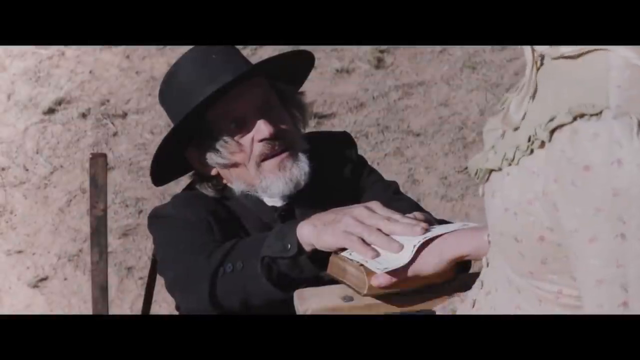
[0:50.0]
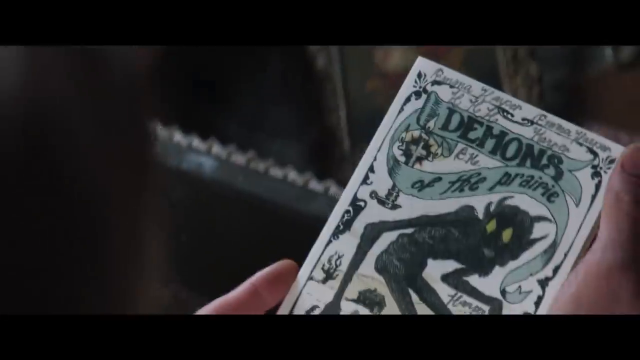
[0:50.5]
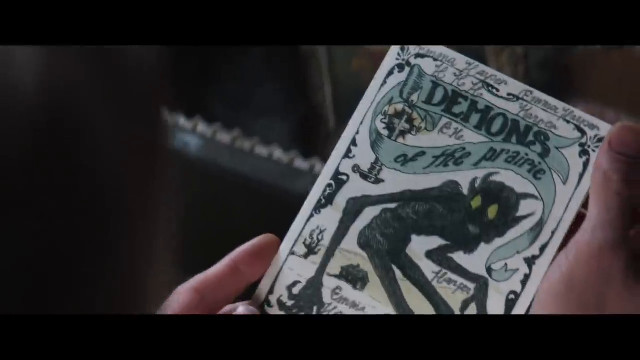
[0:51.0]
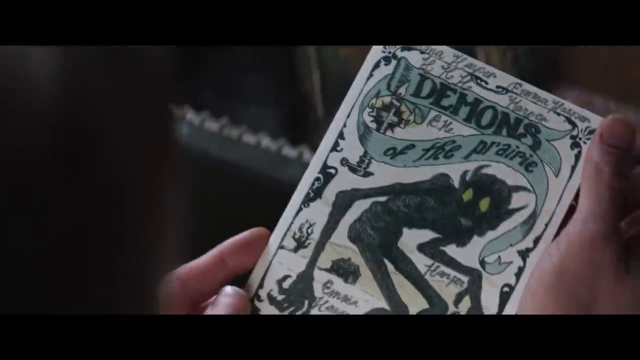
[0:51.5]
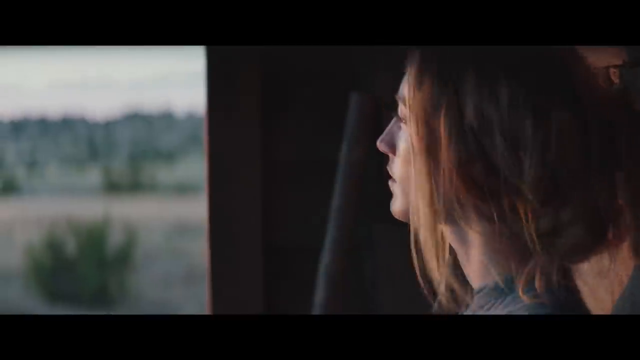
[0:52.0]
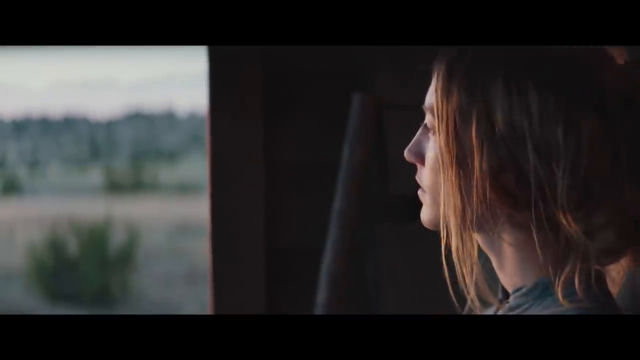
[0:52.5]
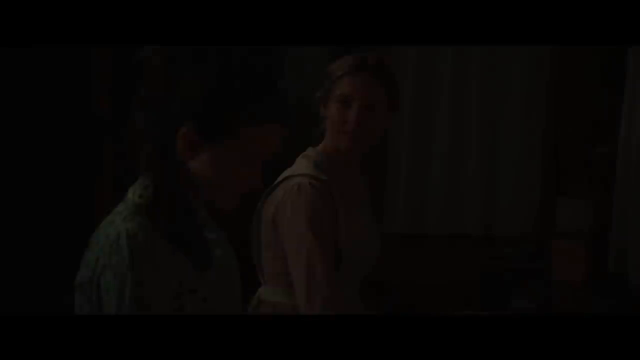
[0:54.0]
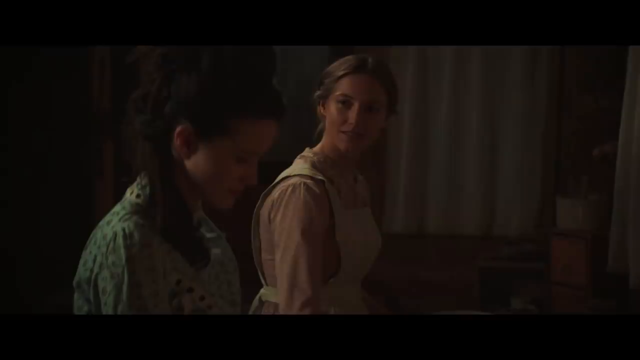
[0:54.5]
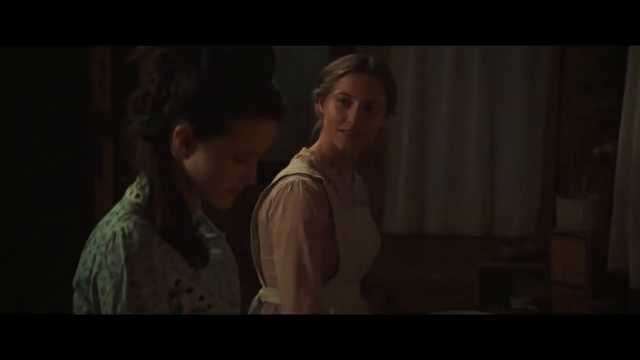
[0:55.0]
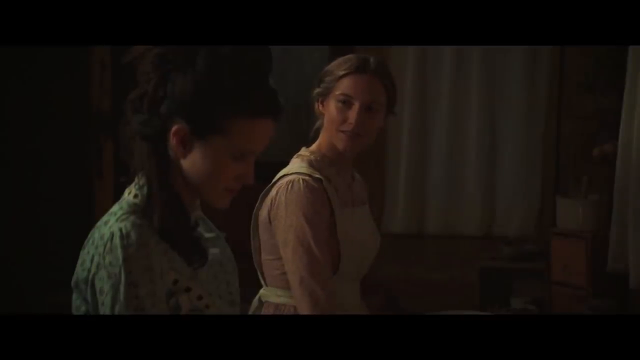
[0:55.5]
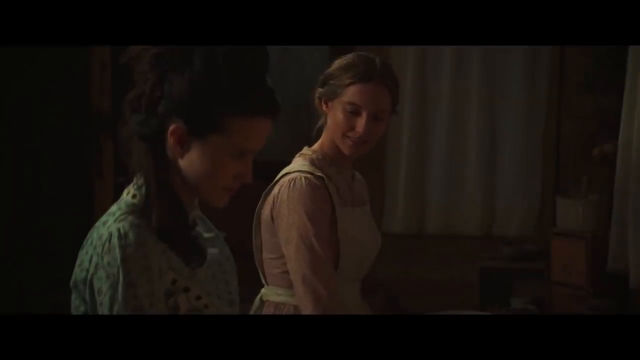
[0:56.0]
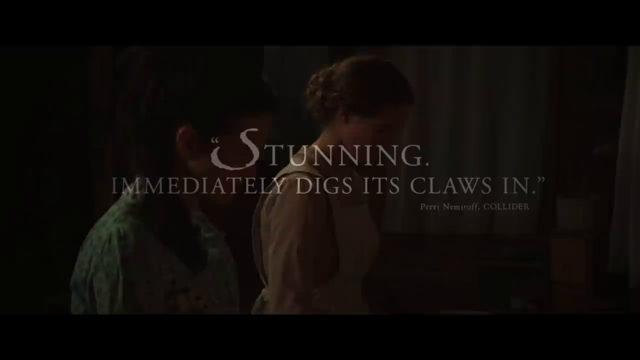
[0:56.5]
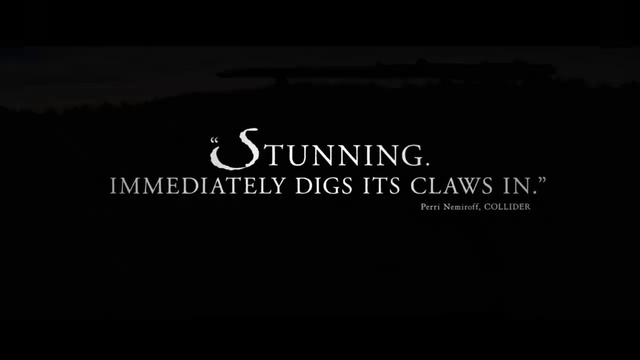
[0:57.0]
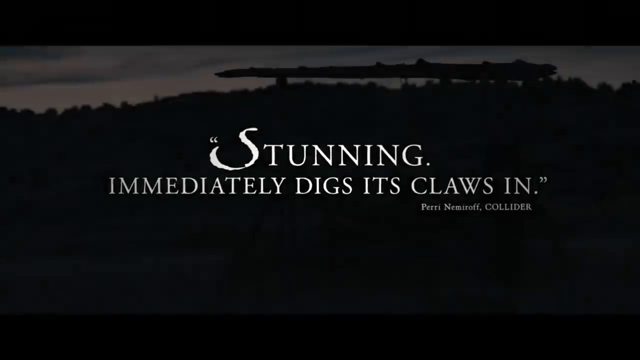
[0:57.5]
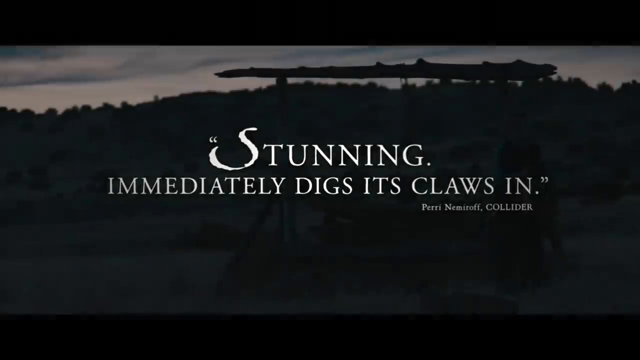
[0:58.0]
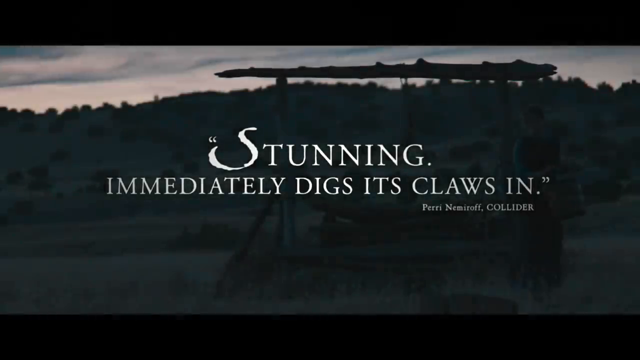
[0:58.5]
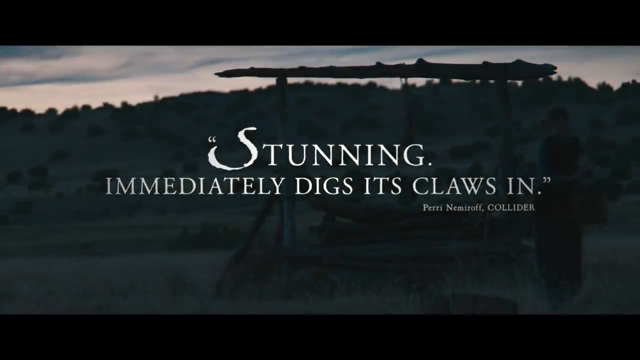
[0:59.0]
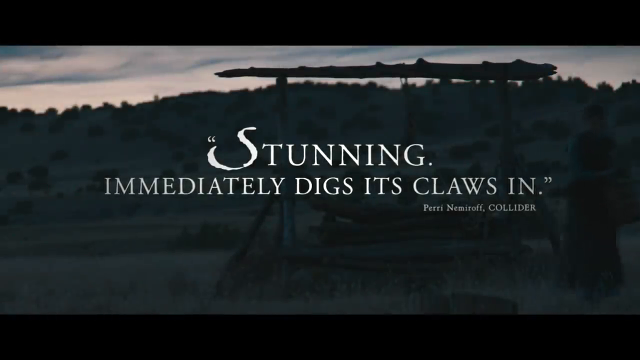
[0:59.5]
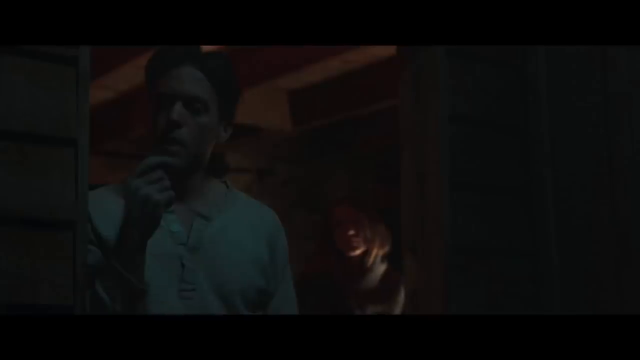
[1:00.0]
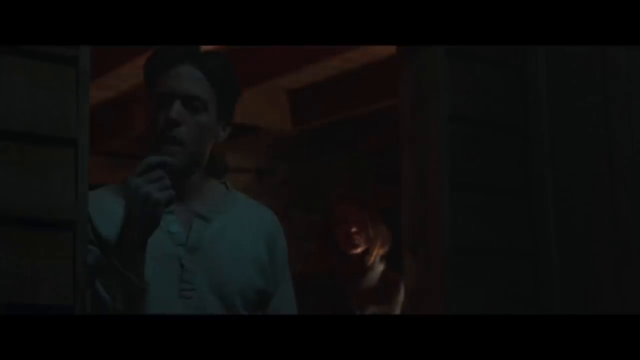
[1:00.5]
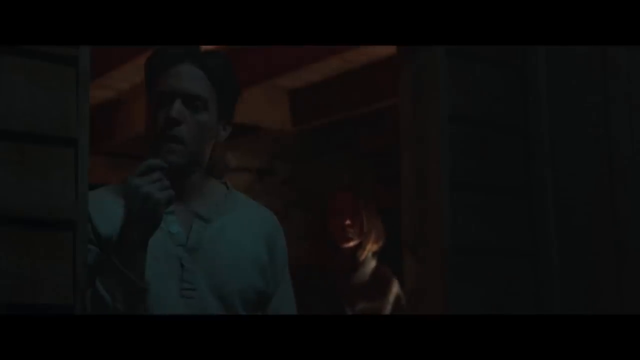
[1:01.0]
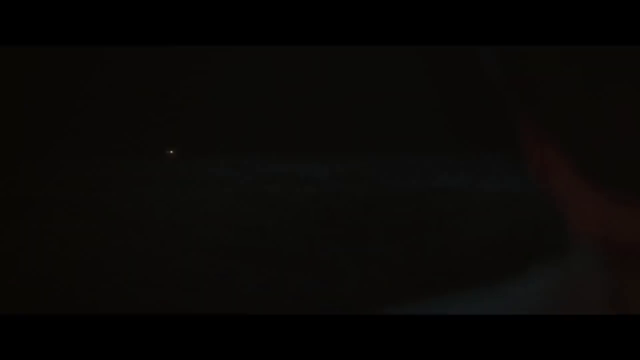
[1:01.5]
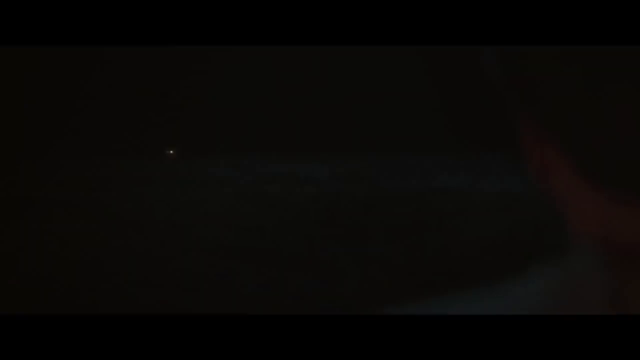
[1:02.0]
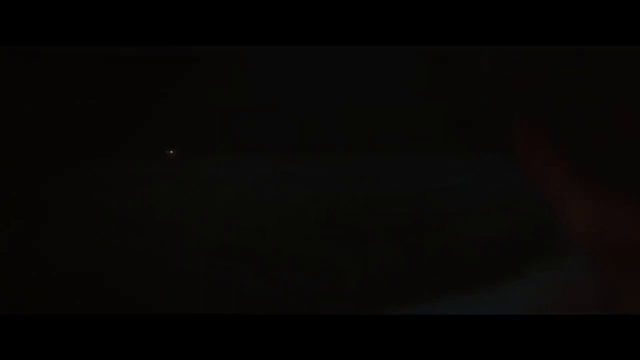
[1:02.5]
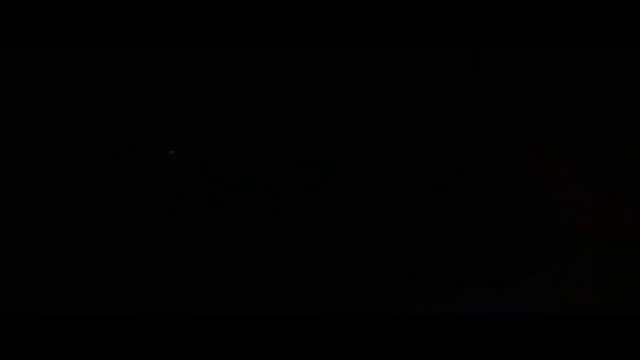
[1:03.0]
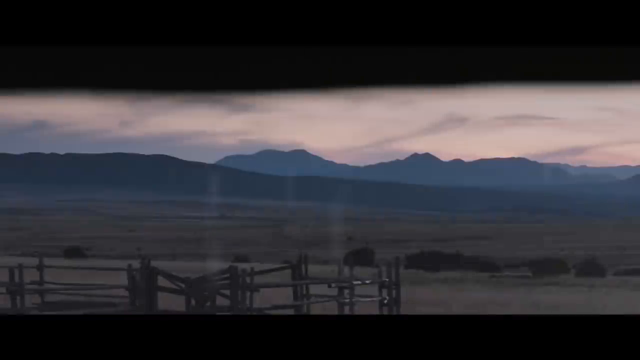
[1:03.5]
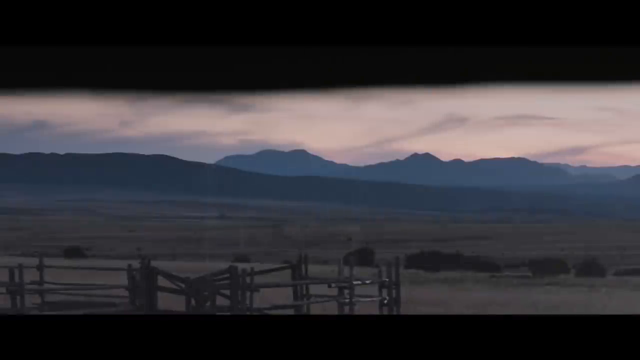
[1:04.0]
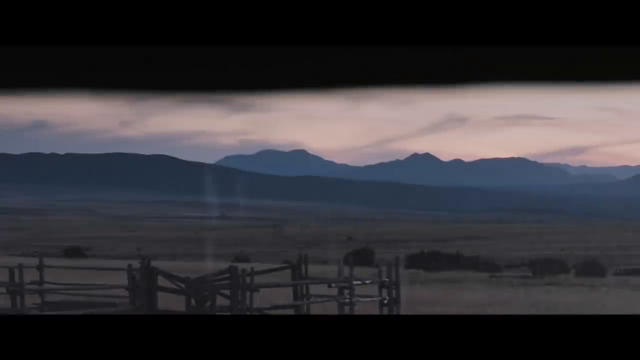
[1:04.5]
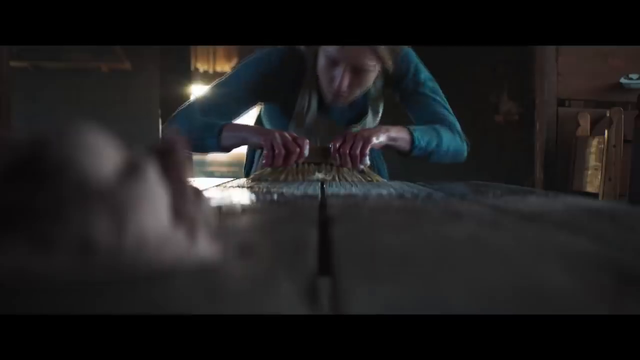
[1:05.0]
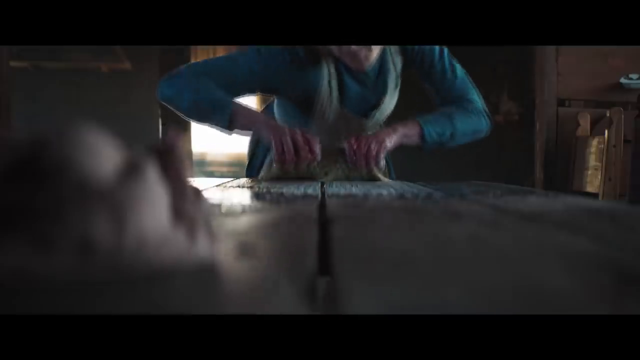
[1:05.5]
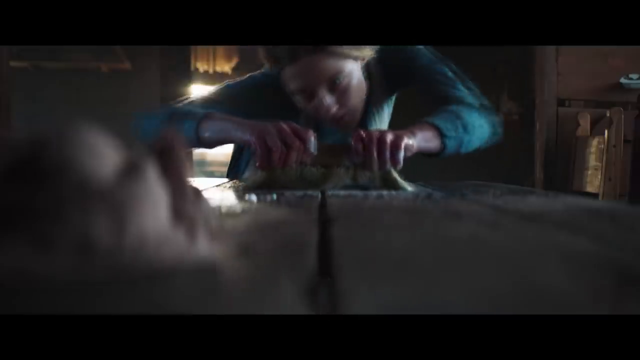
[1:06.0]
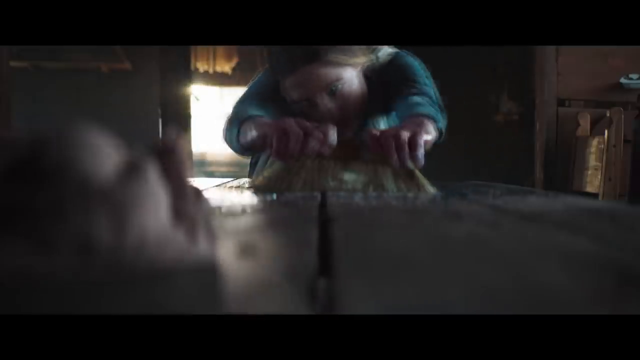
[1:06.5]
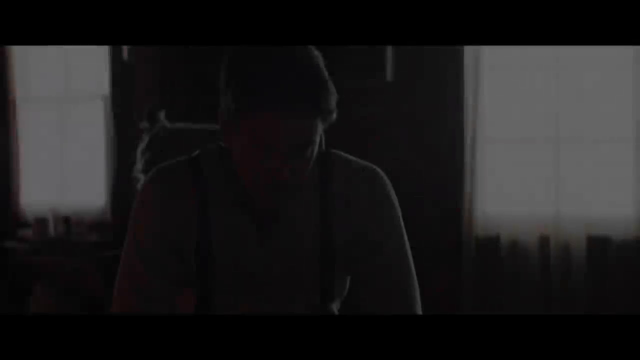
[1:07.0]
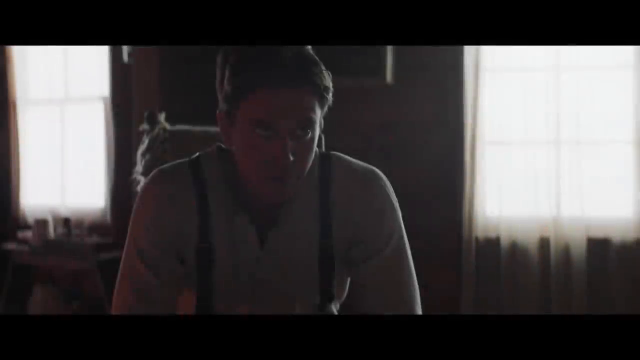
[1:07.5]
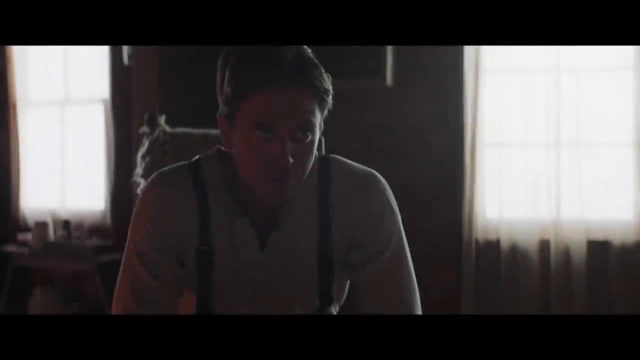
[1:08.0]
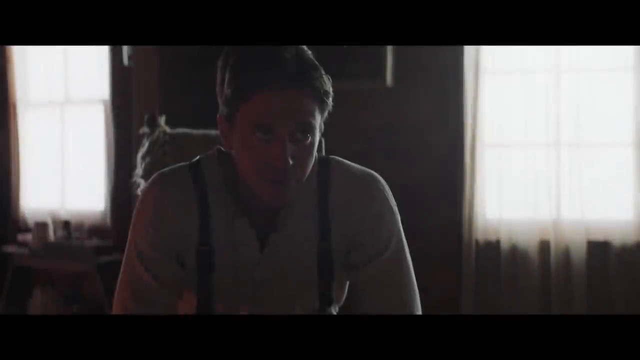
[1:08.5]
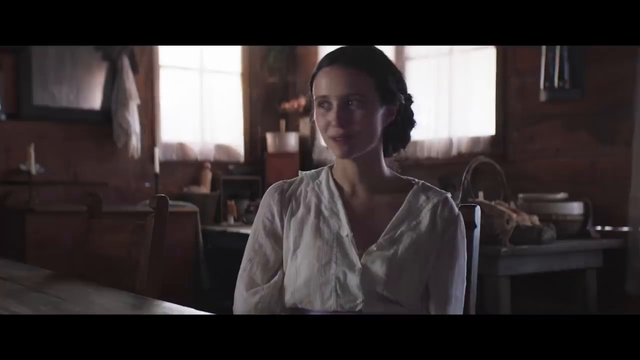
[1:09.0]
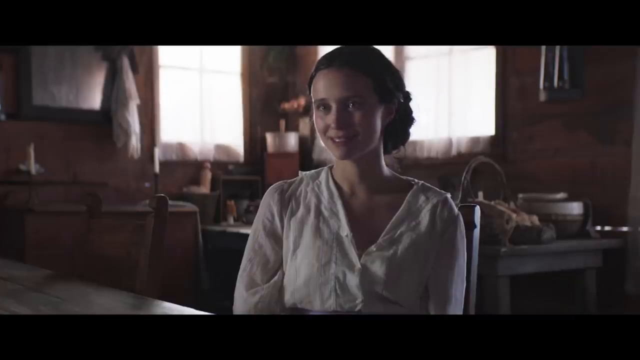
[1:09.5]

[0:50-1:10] The shot starts with the man in the black hat, who looks somewhat like a priest but maybe is not. Someone appears to look at a card that has "demon" or "demon of the prairie" on it, with a demonic stick figure. The woman with brown hair looks out a window and seems to talk to someone. The text "stunning, immediately digs its claws in" is overlaid on a background of the farm or yard, where there appears to be some sort of well. A man in a quarter-buttoned shirt appears to look out the window, with his wife or someone behind him. Prairies appear, with hills in the background under a pinkish-white sky and a wood fence in the foreground; it looks like it is raining. A very close-up shot shows the woman scrubbing a brush on wood; her hands look red as she reaches. A man in suspenders looks up and talks to a different lady with dark brown hair, probably in a white dress; they are sitting in a kitchen.